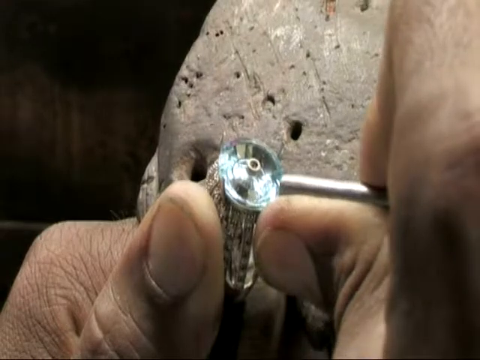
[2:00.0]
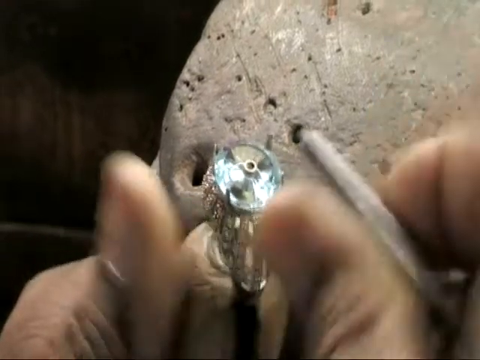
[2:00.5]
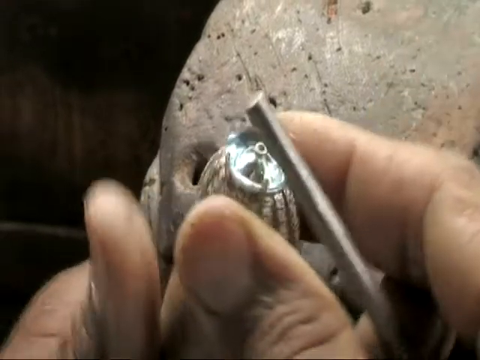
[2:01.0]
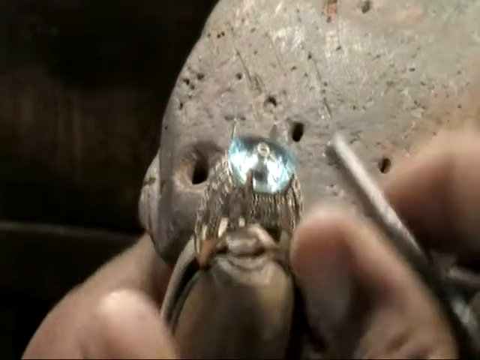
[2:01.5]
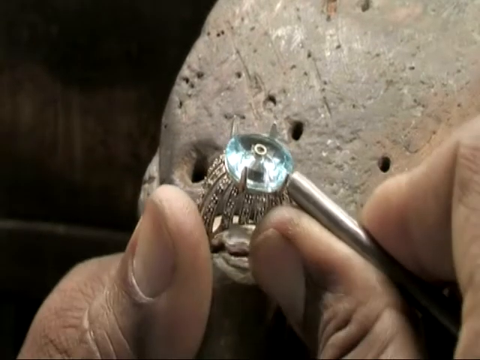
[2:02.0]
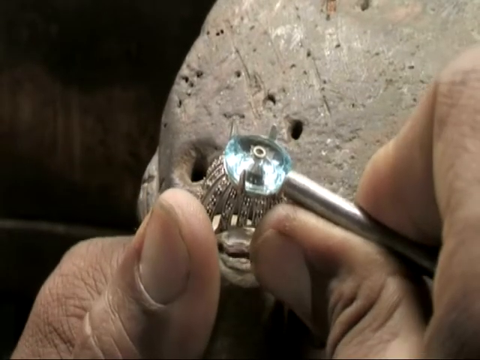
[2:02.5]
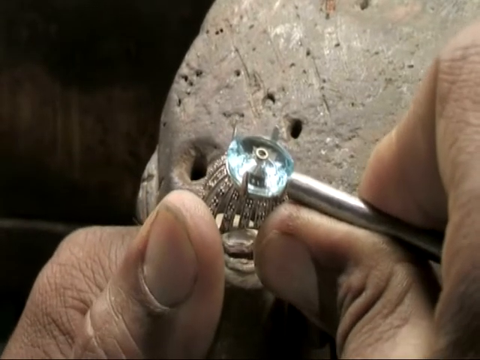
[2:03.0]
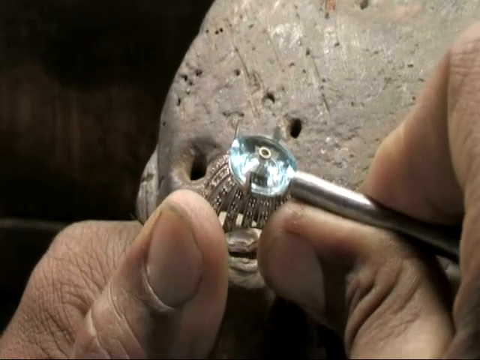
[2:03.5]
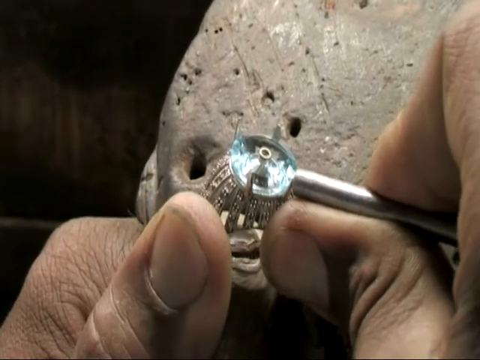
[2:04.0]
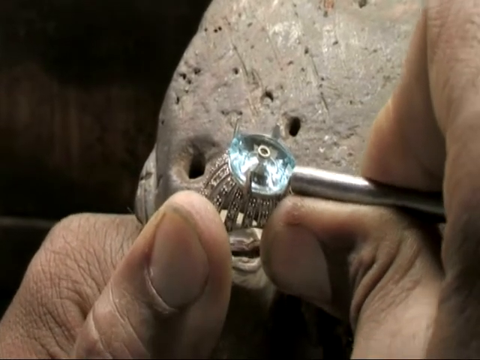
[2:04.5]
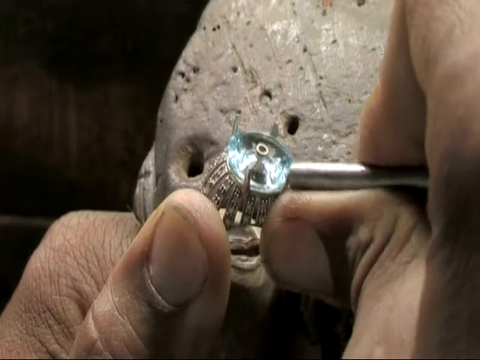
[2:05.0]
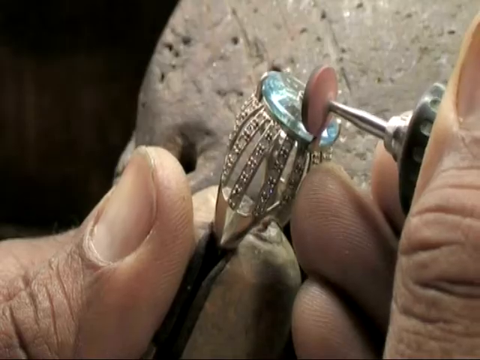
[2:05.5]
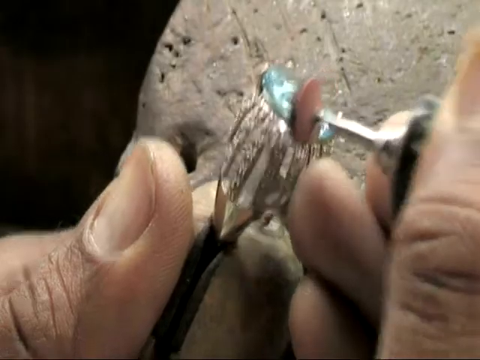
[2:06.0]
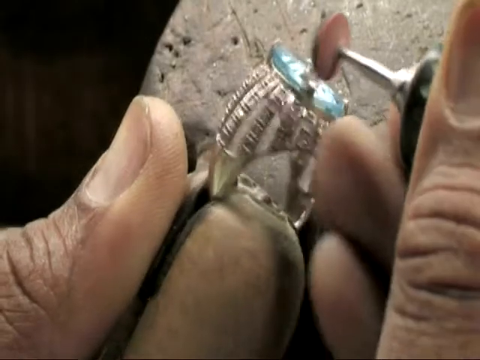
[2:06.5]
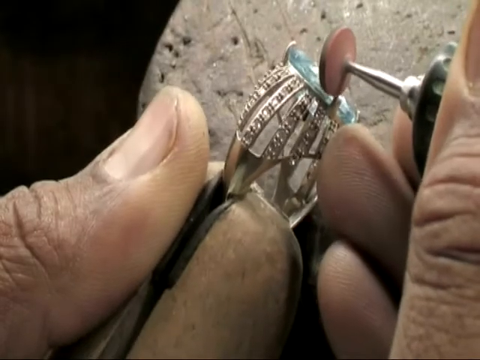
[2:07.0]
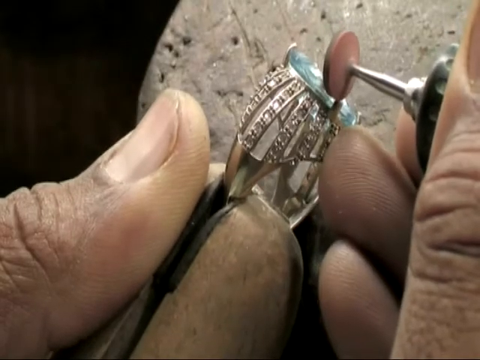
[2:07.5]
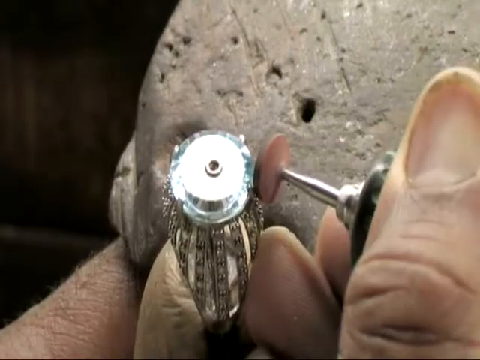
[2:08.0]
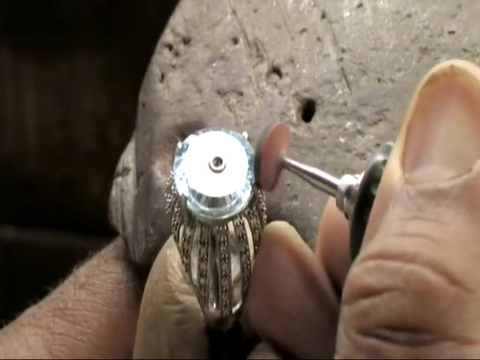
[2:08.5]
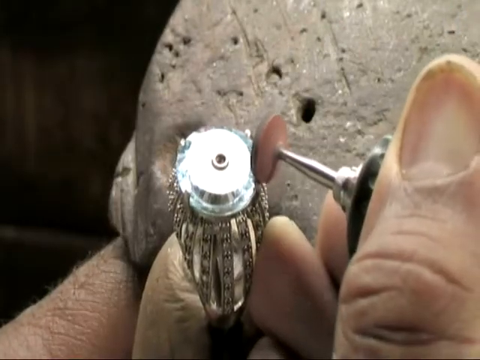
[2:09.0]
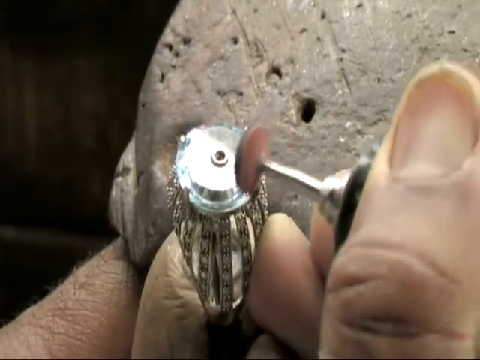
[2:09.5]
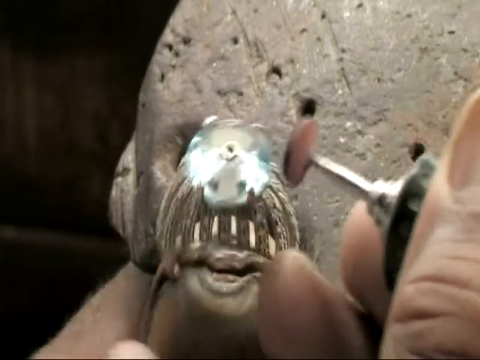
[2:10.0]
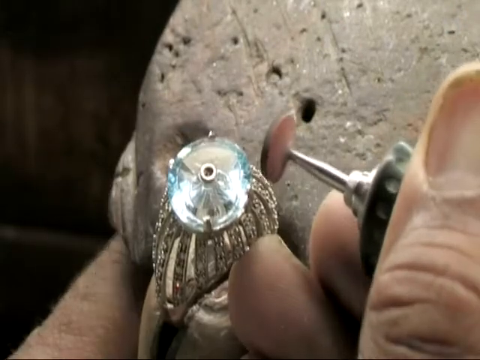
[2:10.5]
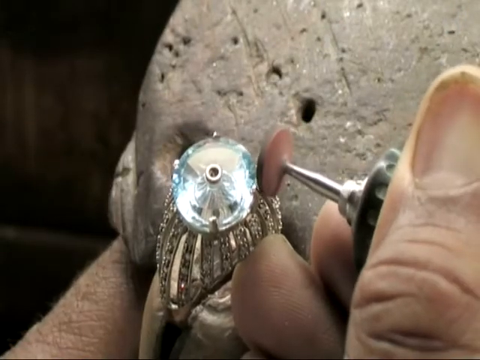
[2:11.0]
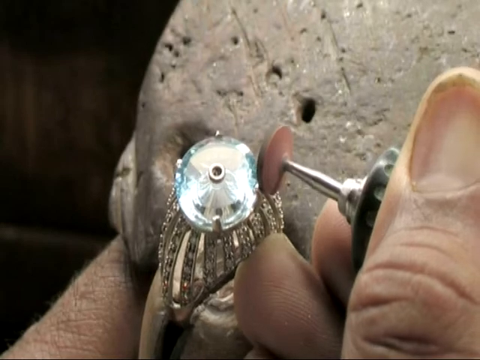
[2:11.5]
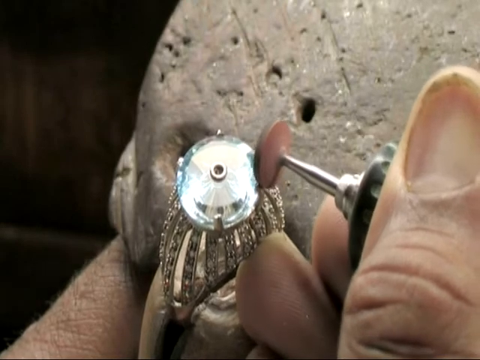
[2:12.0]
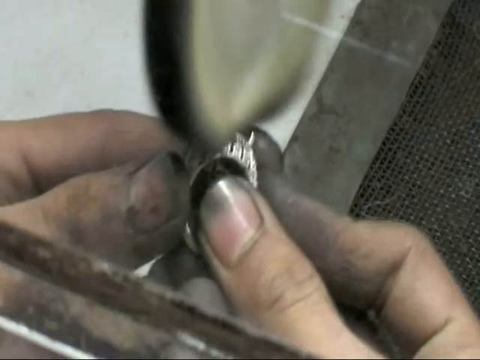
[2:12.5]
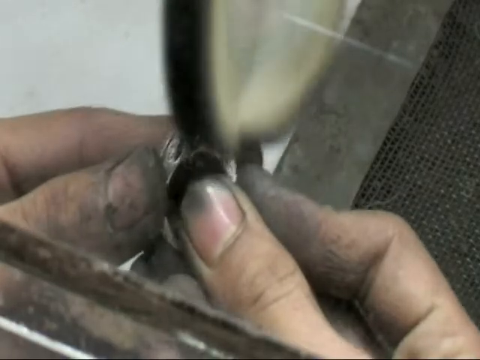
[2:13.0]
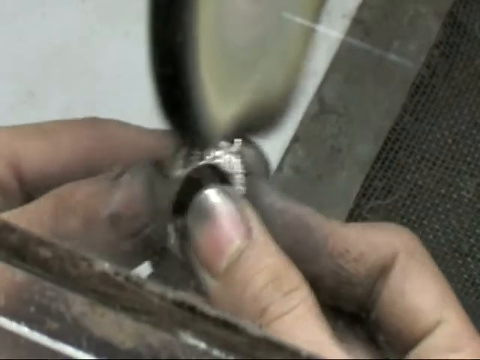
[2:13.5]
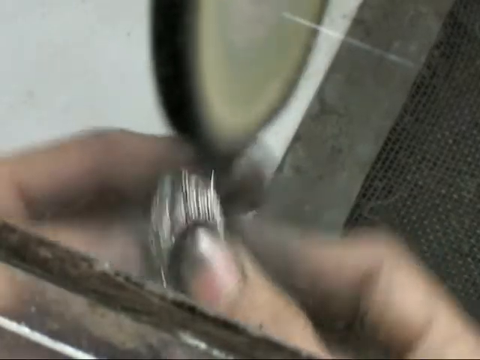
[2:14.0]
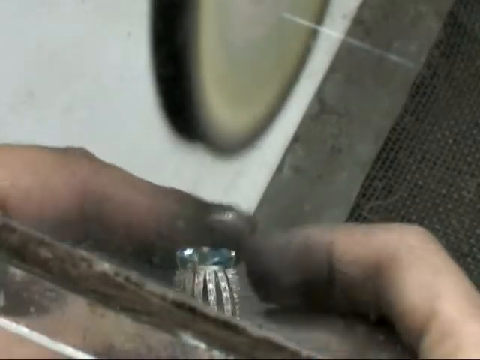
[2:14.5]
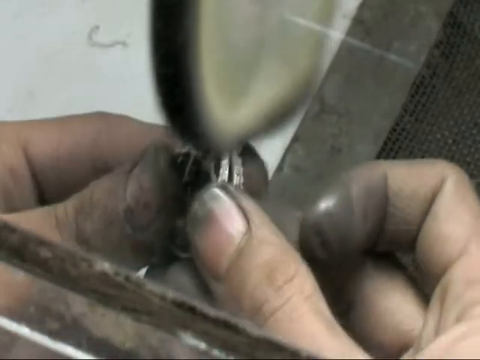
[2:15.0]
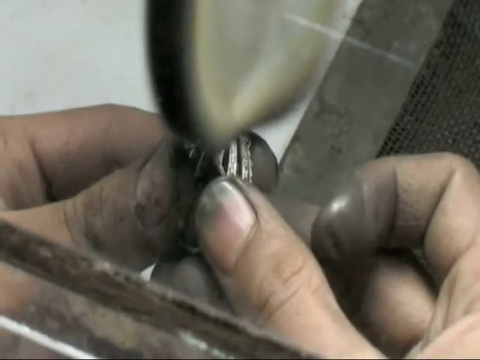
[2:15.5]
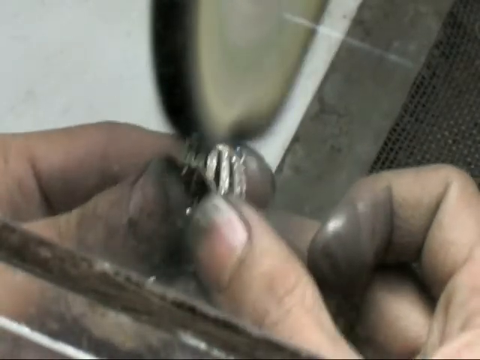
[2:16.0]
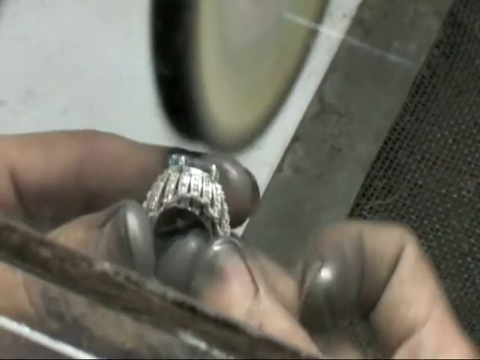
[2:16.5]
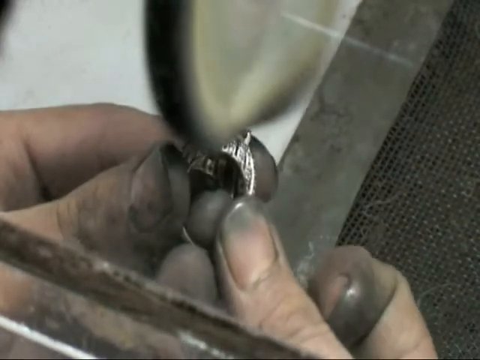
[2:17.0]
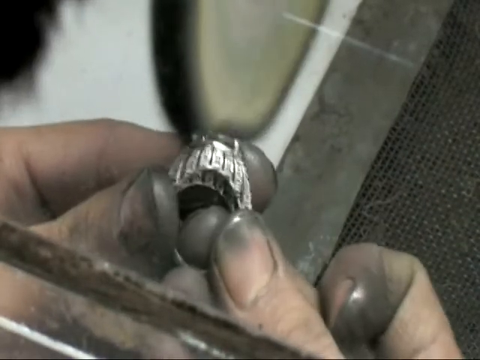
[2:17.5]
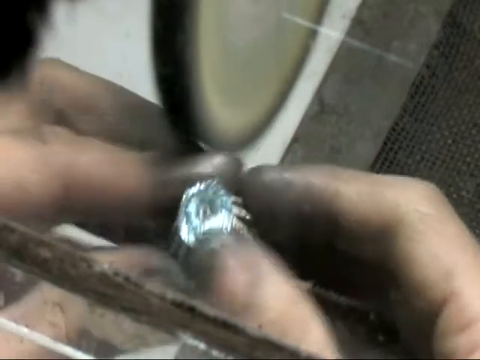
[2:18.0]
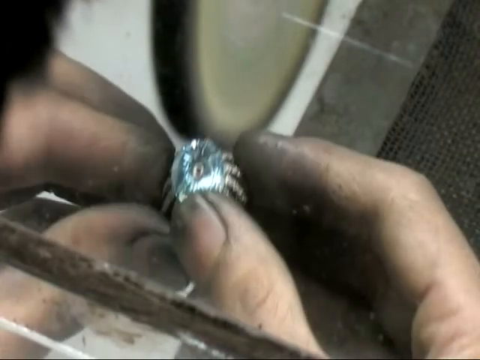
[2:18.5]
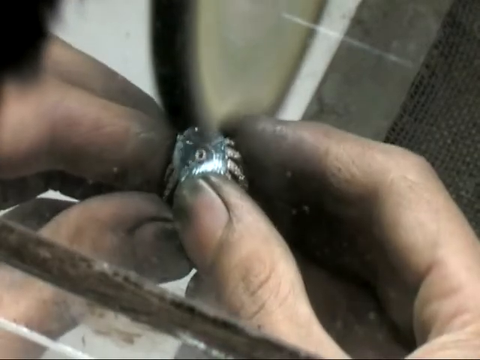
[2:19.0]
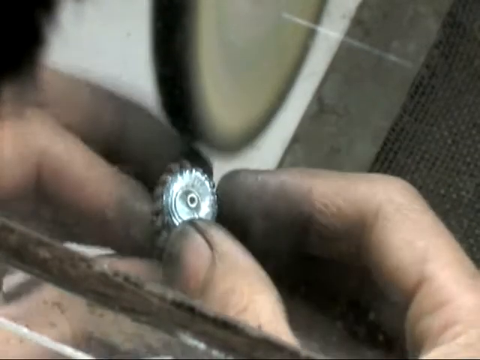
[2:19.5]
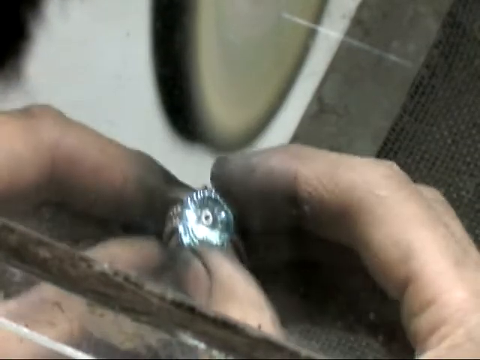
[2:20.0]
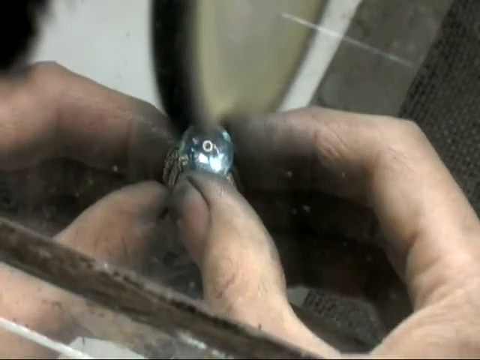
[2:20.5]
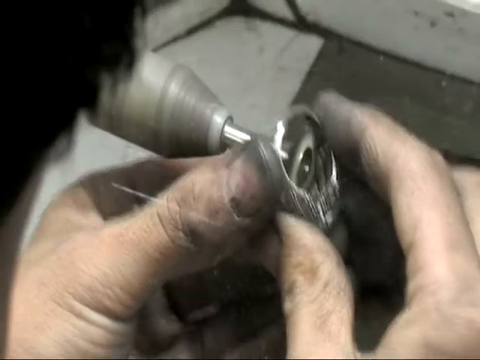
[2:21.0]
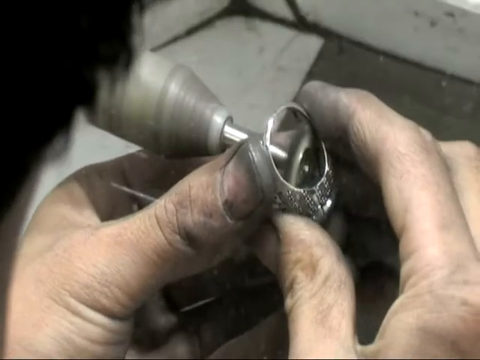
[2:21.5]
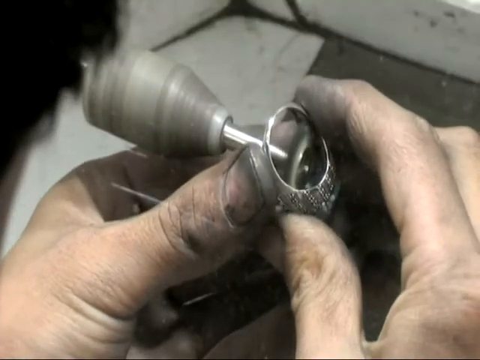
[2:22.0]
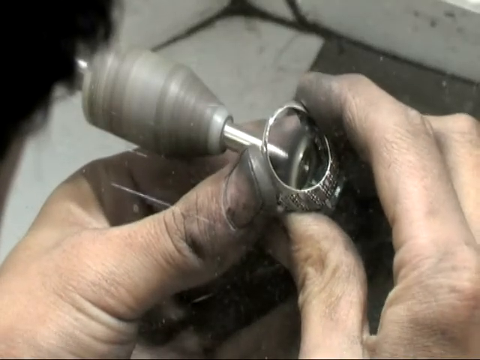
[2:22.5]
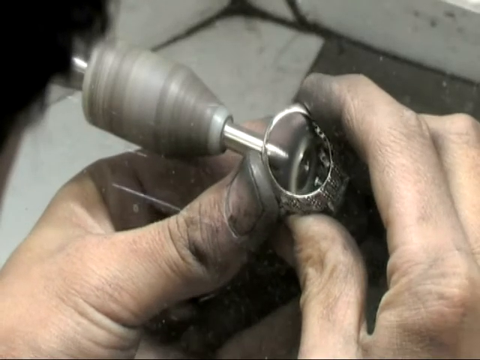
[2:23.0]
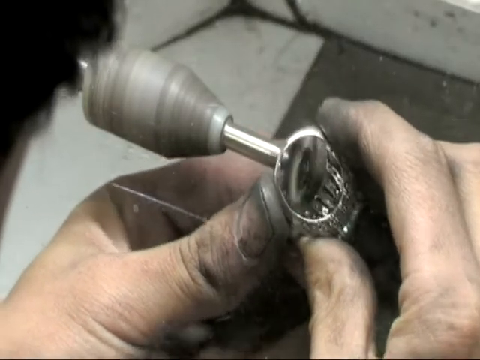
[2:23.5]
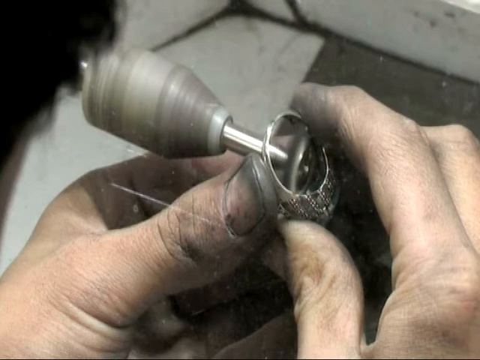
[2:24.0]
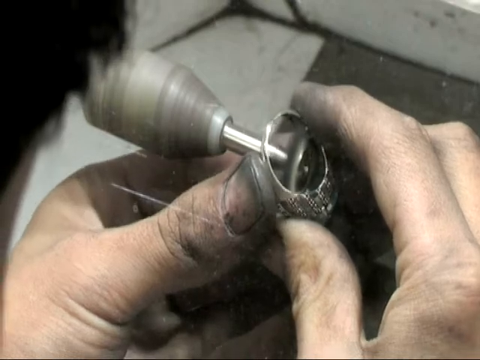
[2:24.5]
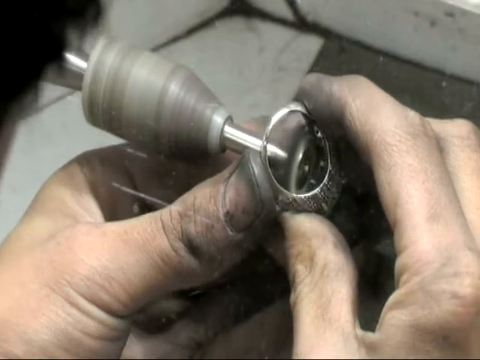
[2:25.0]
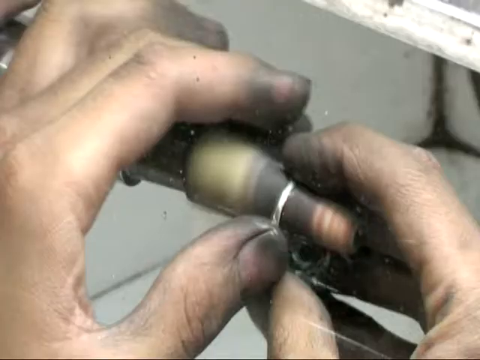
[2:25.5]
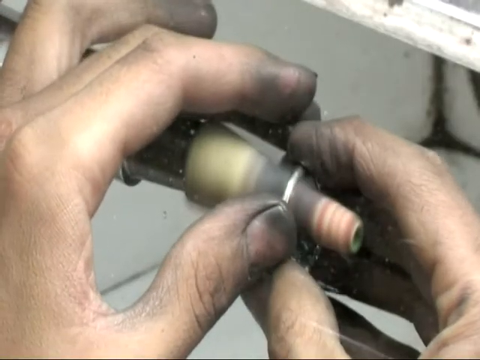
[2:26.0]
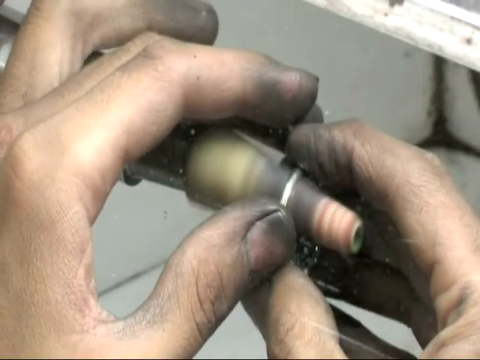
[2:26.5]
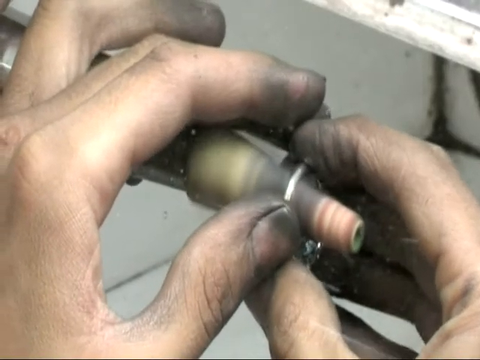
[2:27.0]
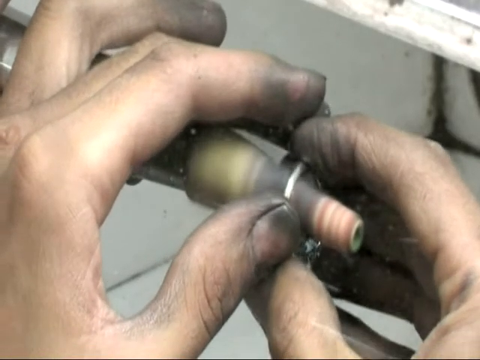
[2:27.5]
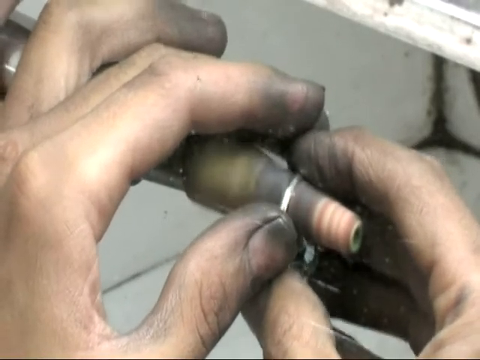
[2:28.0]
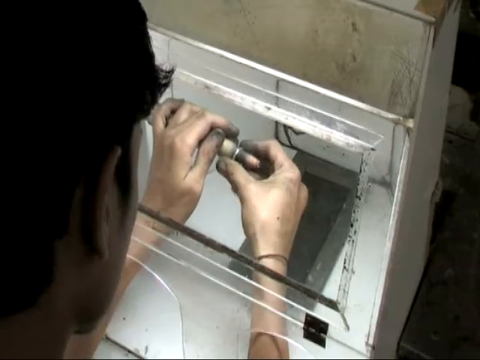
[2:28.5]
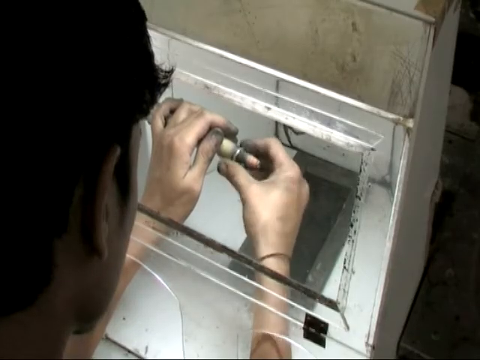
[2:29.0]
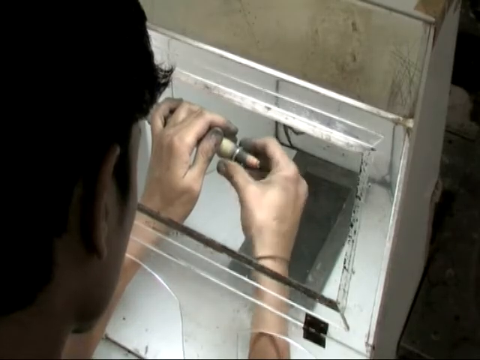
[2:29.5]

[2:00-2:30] The ring is a 9 carat ring with a light blue diamond in the middle, followed by a band with a lot of diamonds in it, where the finger slips in. The video shows how the ring is put together and what materials are used. A man puts pieces of the jewel together, using special tools on the inside of the band that seem to smooth out the surface and get the details correct. No animals are seen.